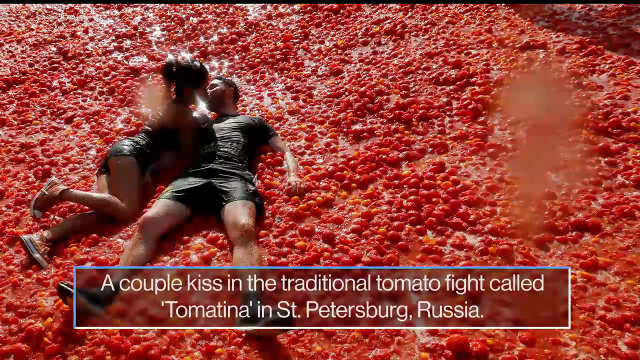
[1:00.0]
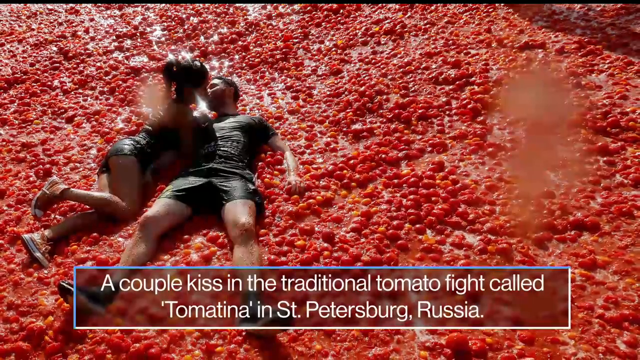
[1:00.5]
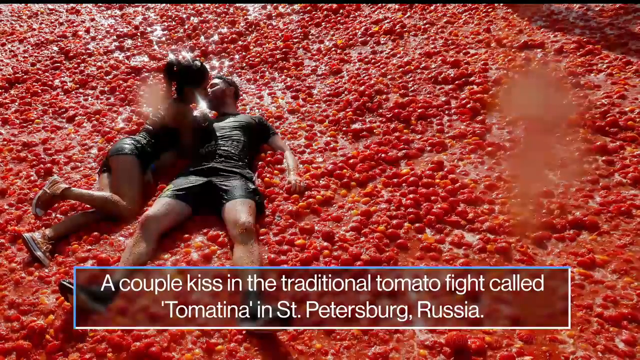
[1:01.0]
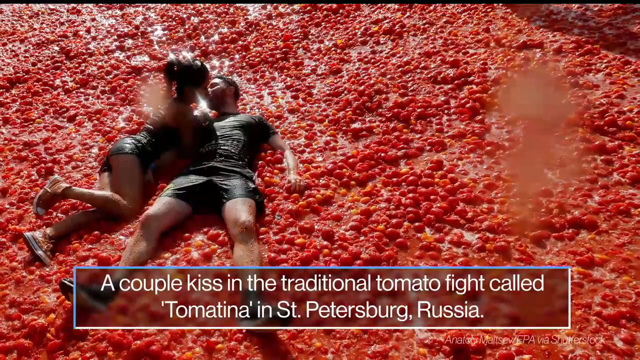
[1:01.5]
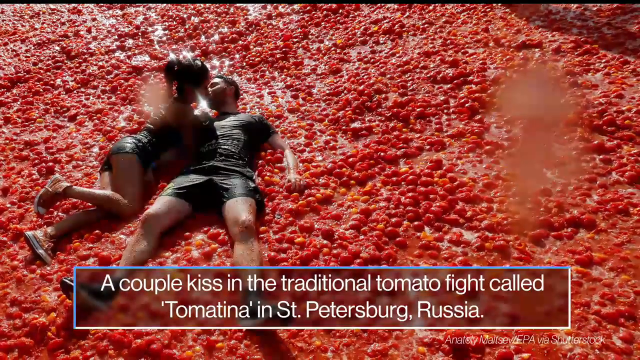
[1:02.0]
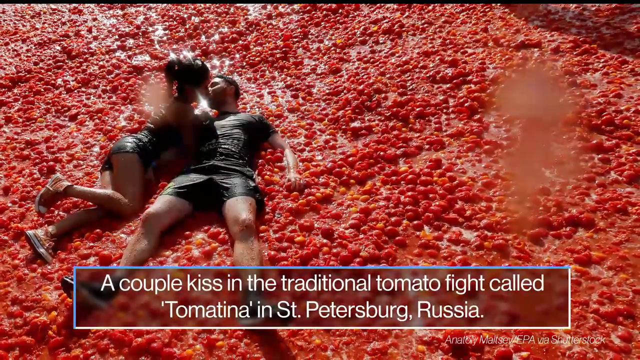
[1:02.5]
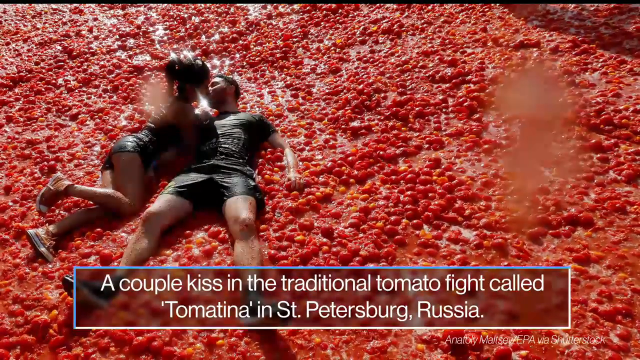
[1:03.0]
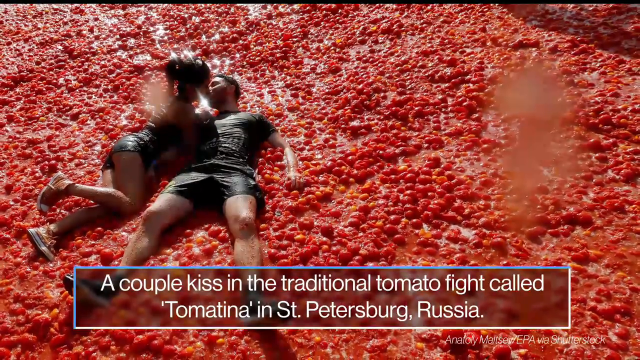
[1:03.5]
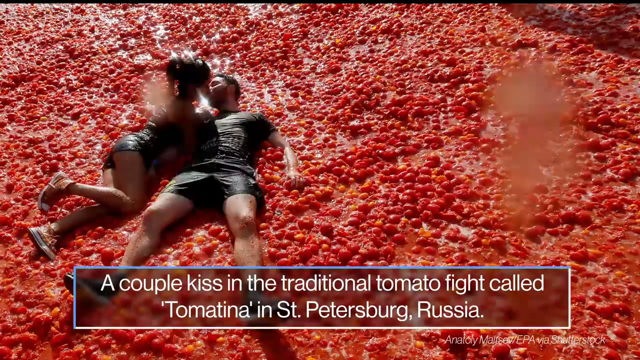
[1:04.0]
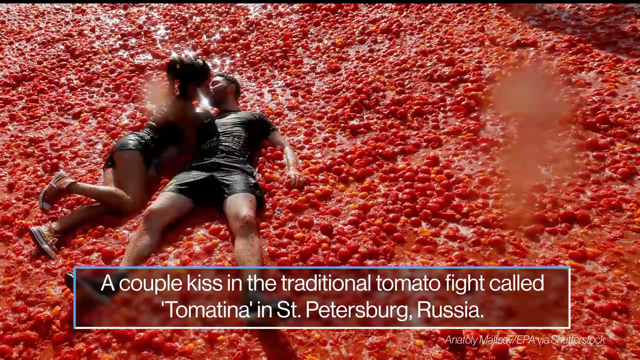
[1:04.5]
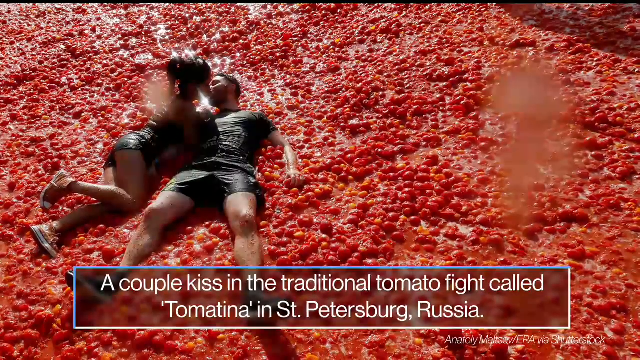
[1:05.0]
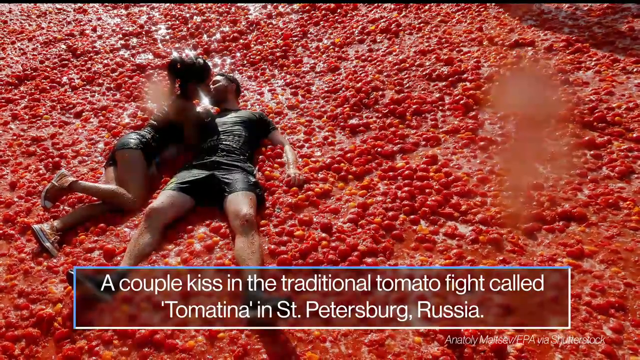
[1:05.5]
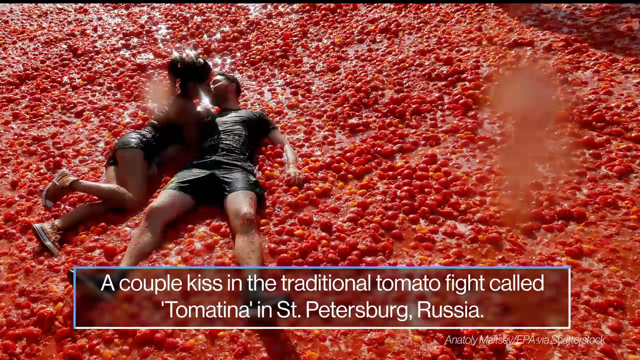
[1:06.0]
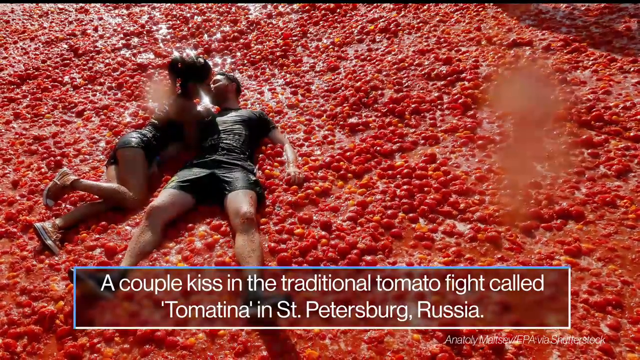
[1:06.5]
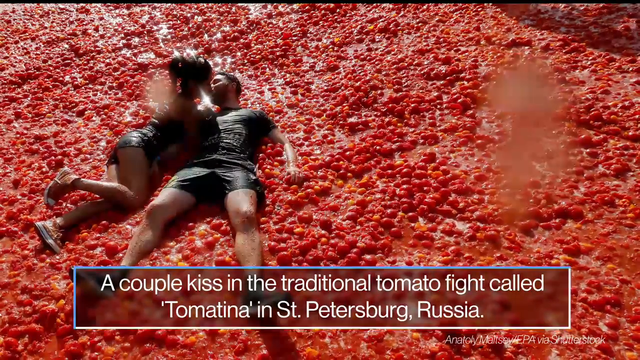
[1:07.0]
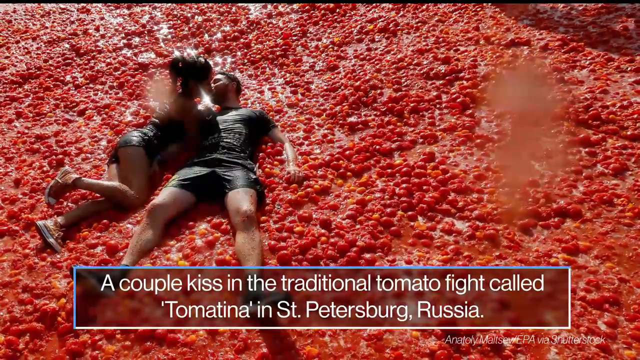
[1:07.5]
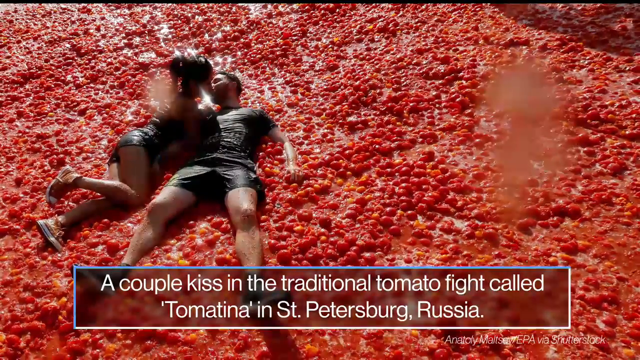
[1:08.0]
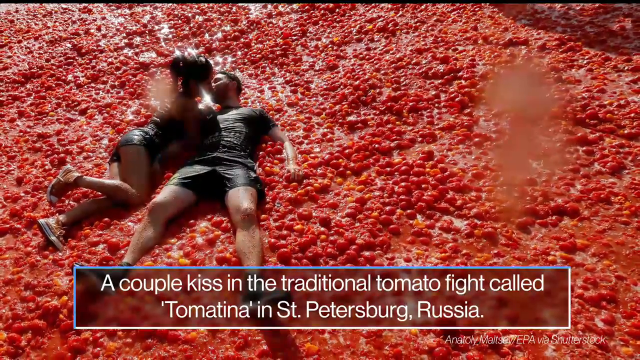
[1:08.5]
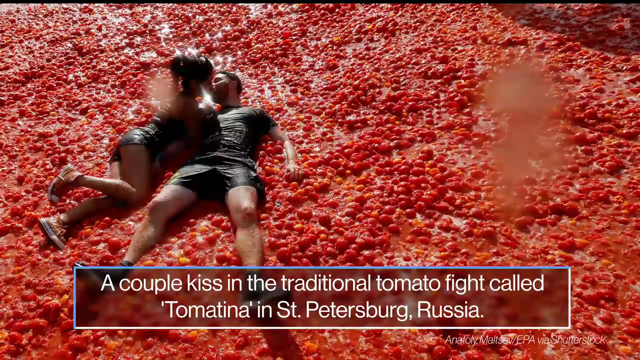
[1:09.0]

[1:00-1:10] The next picture shows a couple in a romantic moment on top of a field of tomatoes. The tomatoes are half squished, and lots of tomato juice pools around and beside them. The man is lying on his back in the tomato pit, and a woman next to him leans on her knees, snuggling up to him for a kiss. Underneath, text says "a couple kiss in the traditional tomato fight called tomatina in St. Petersburg, Russia."